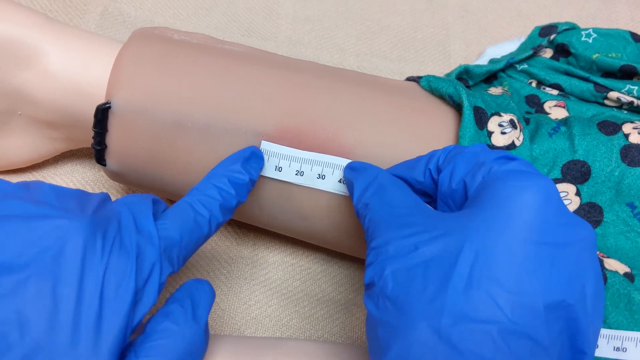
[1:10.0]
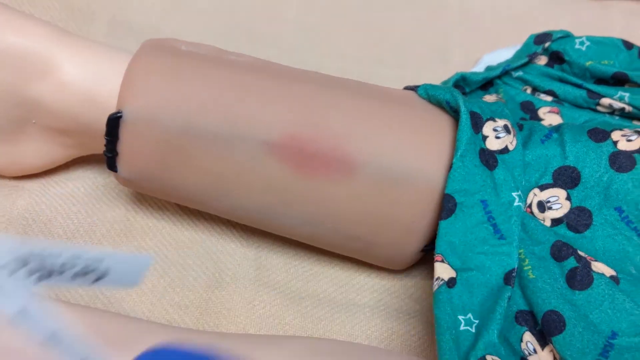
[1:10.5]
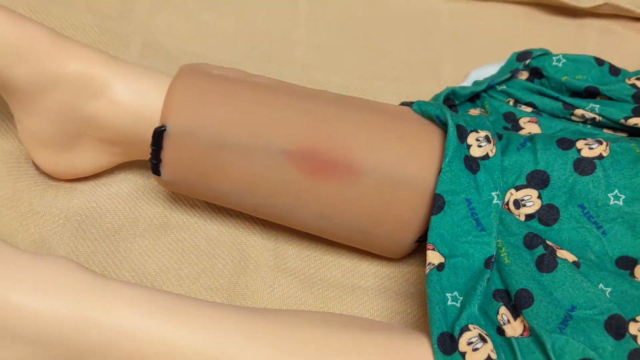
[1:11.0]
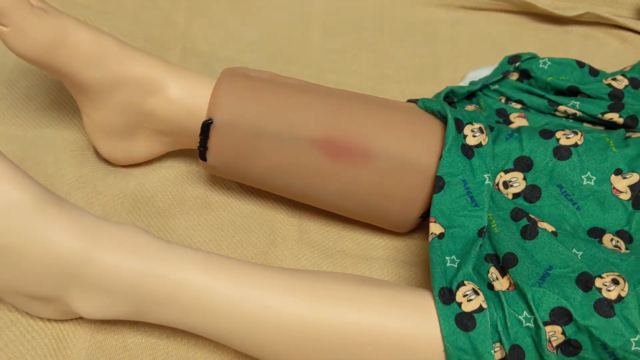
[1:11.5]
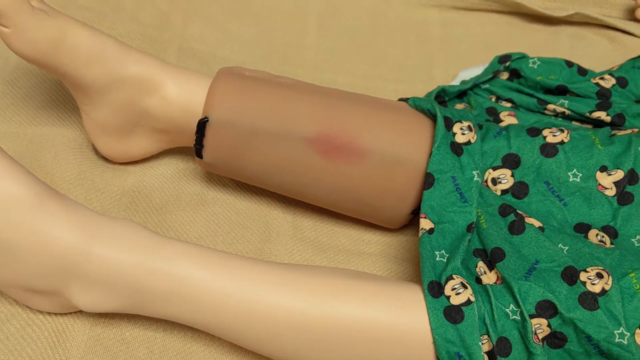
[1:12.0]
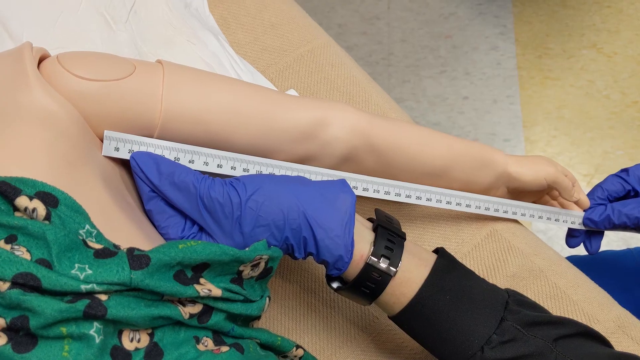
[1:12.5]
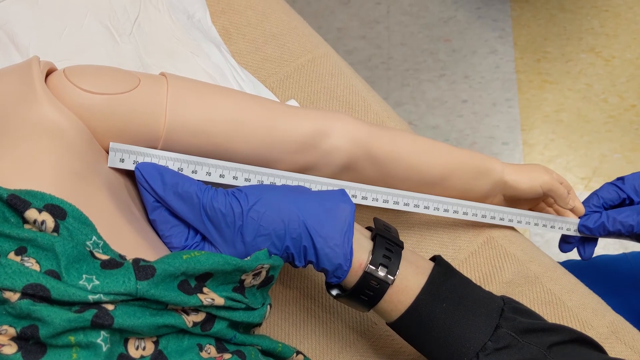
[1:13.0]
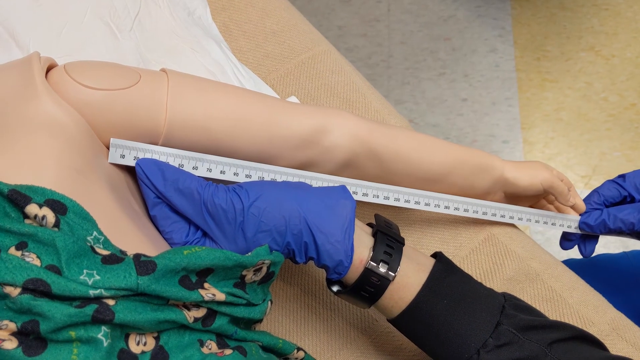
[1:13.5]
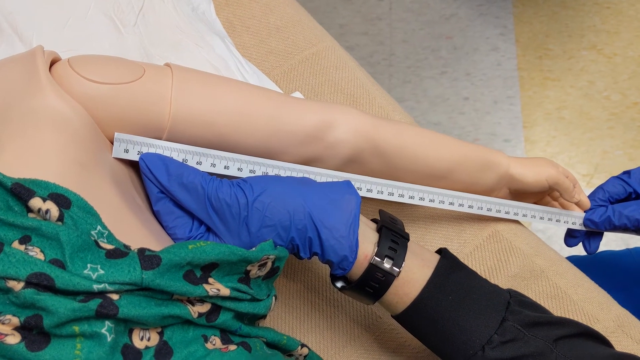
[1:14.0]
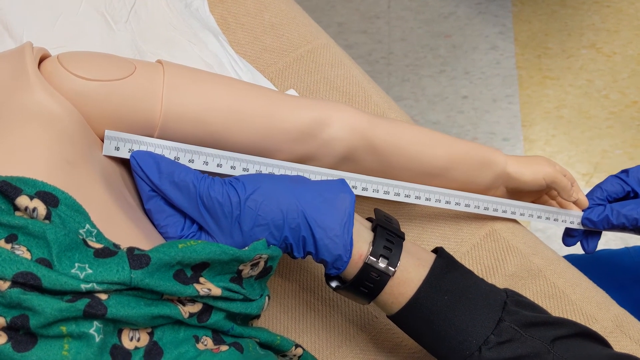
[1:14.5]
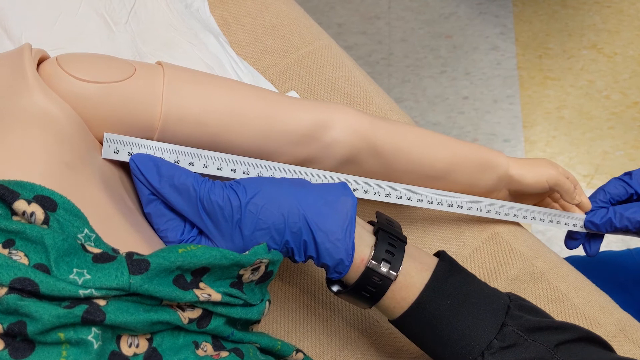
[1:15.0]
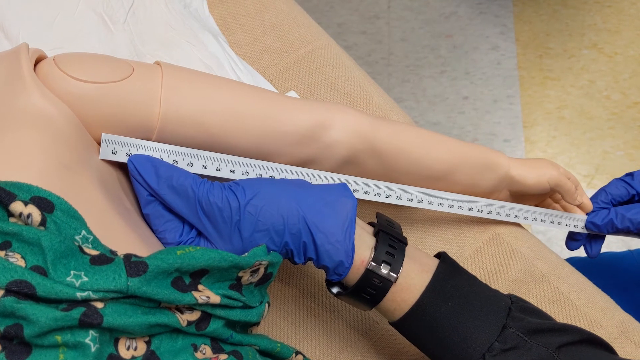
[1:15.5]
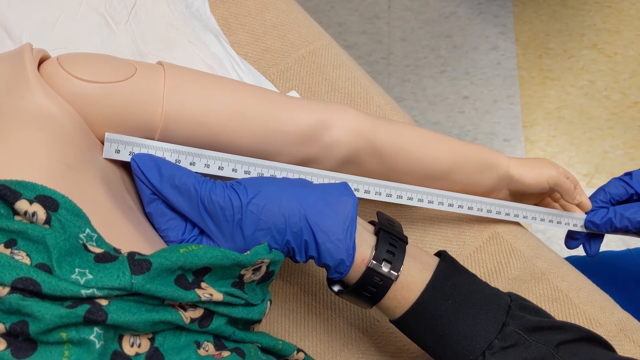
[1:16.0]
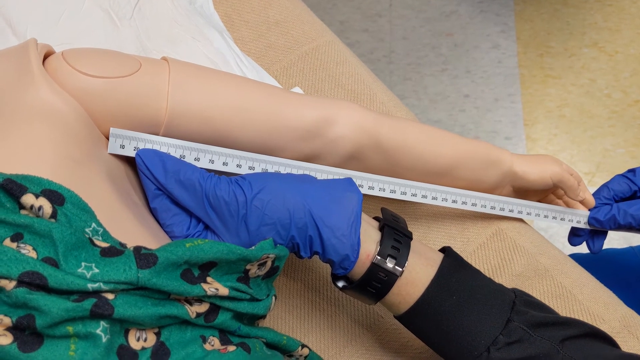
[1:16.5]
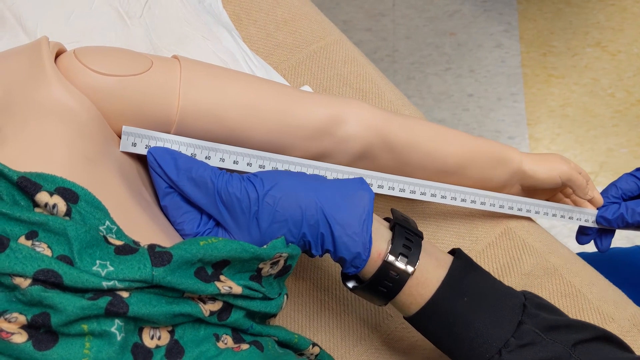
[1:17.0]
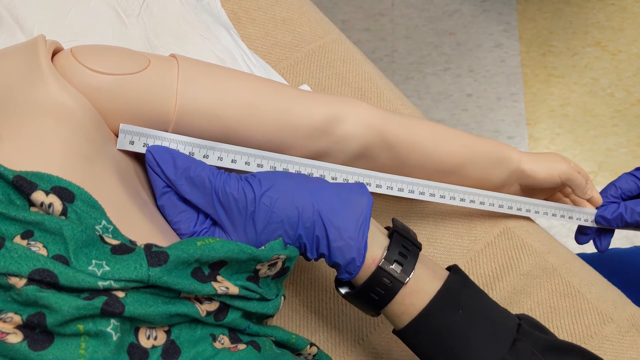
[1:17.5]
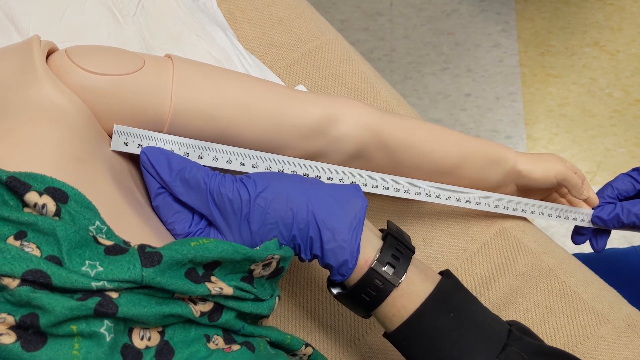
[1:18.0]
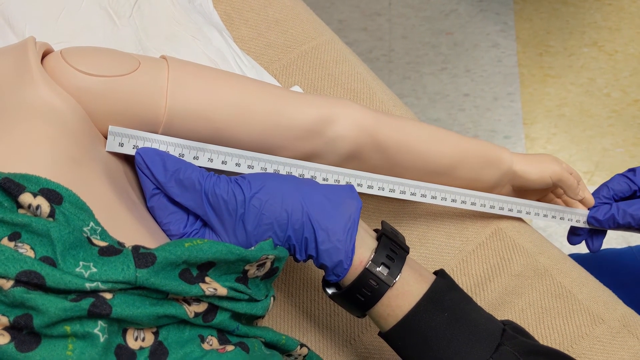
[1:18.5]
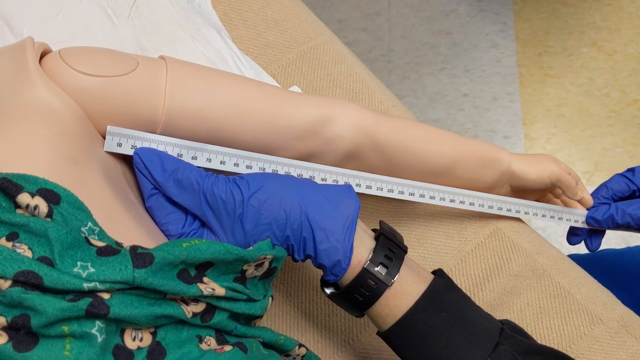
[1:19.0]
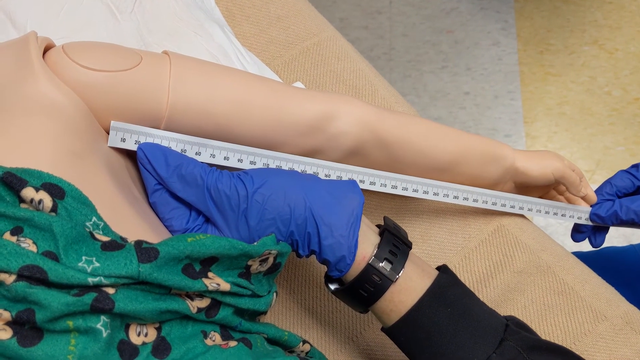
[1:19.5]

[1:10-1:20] As the paper is taken off the leg, the folded part bounces out from behind it because it is no longer held down. The mannequin's arm is shown, with a large lump in the center of it. The measuring tape is used again, now measuring from the top of the mannequin's arm, where it meets the shoulder, to the tip of the finger. A tiled floor of gray and yellow tiles is visible underneath the sheet and the hospital bed the mannequin is on. The measuring tape is held by the person's left hand and also at the bottom by the right hand to keep it straight.